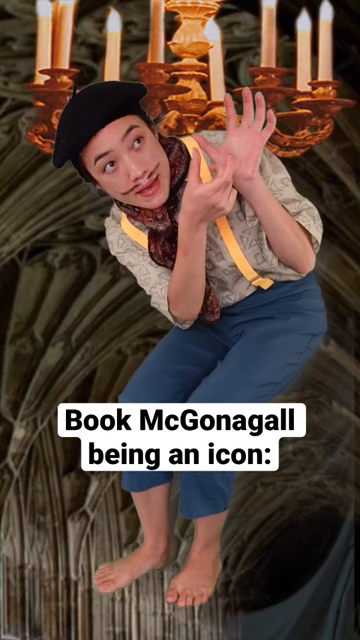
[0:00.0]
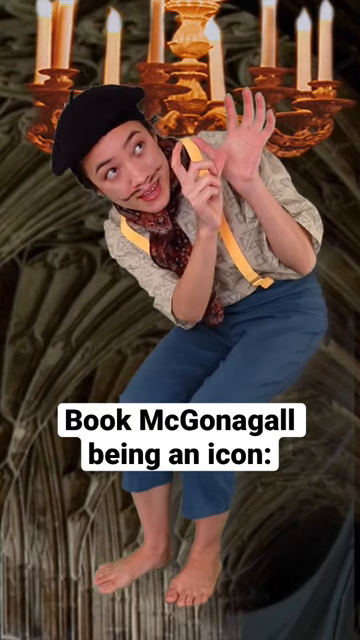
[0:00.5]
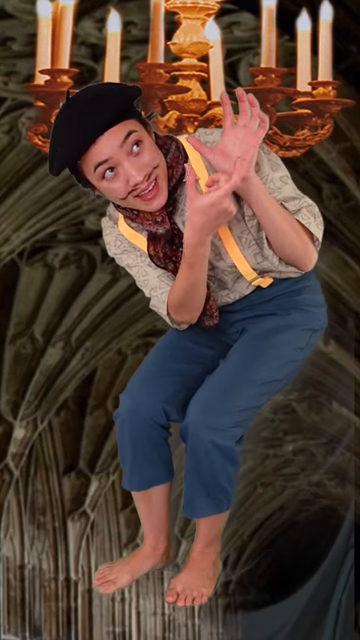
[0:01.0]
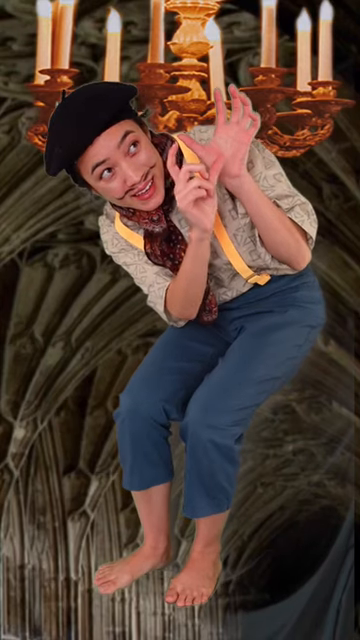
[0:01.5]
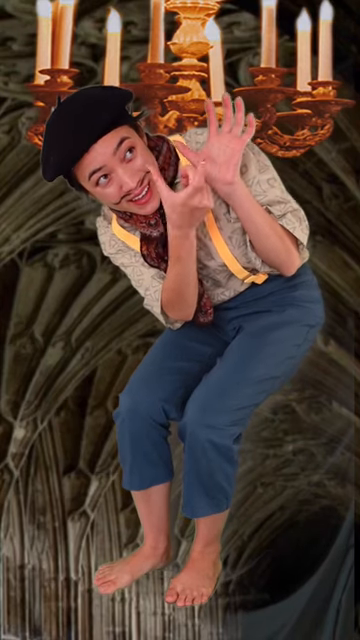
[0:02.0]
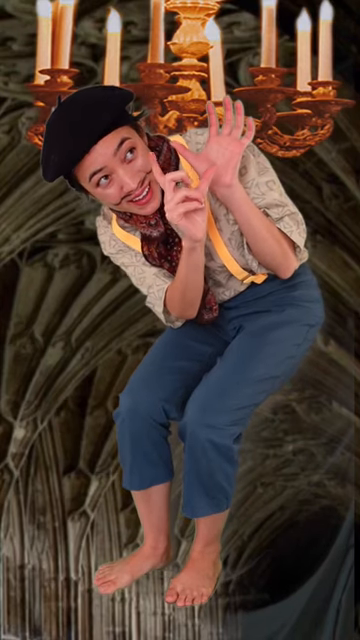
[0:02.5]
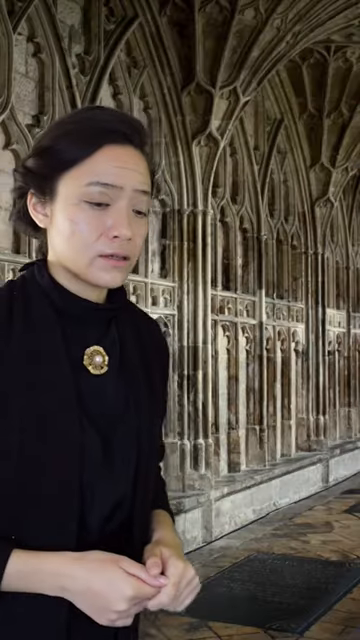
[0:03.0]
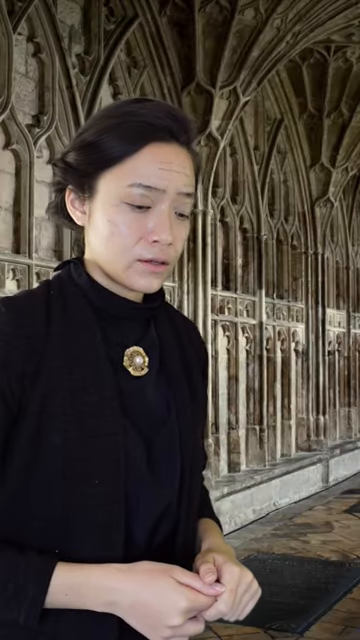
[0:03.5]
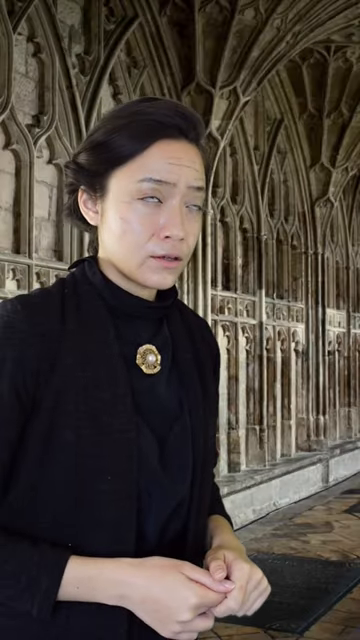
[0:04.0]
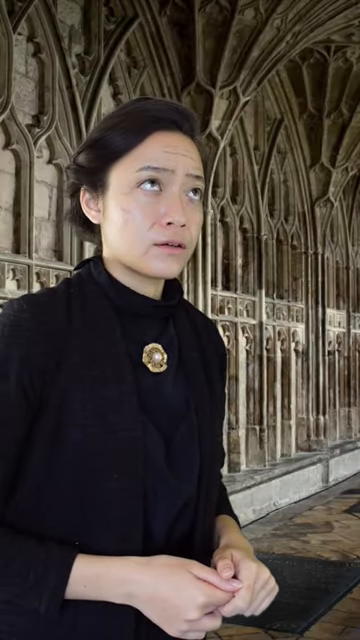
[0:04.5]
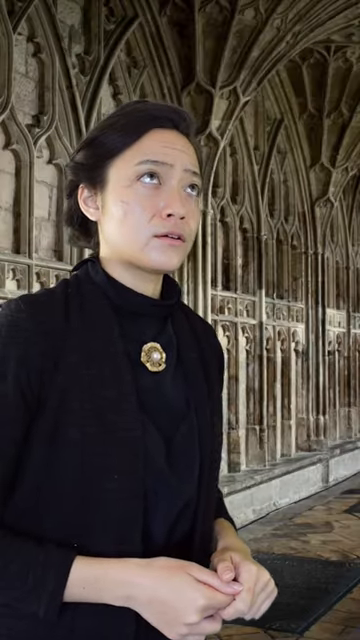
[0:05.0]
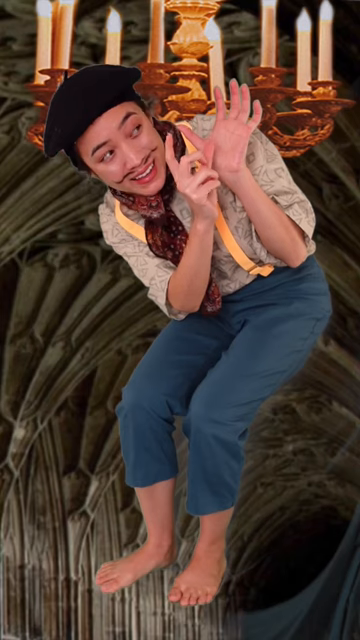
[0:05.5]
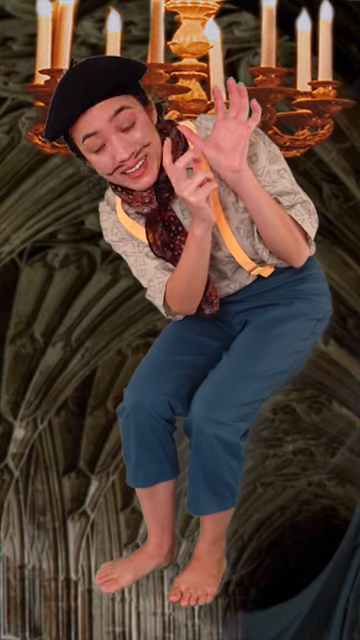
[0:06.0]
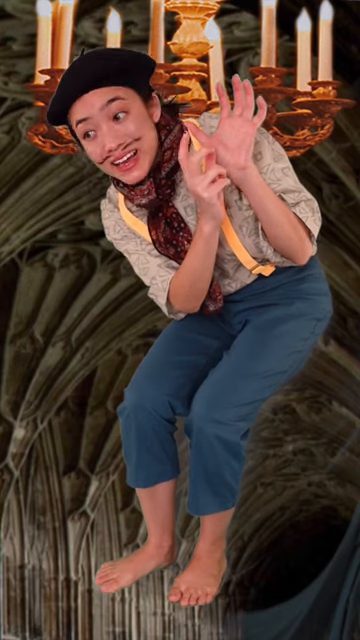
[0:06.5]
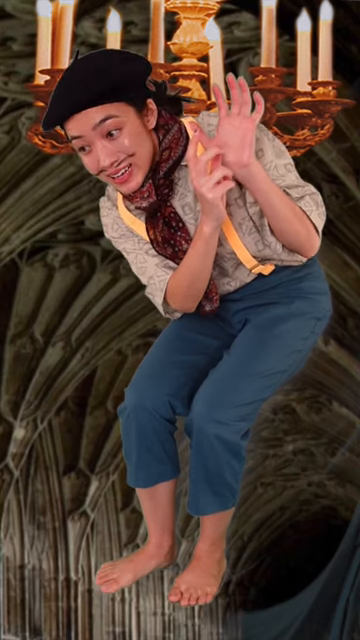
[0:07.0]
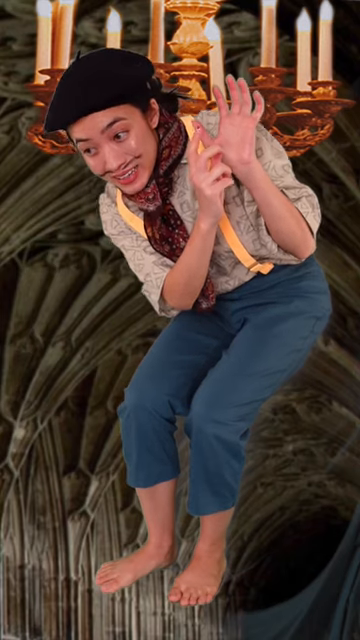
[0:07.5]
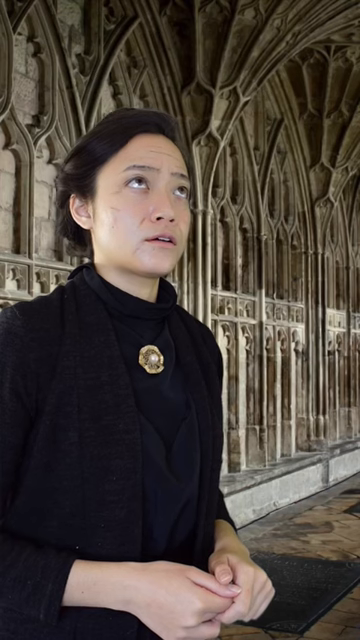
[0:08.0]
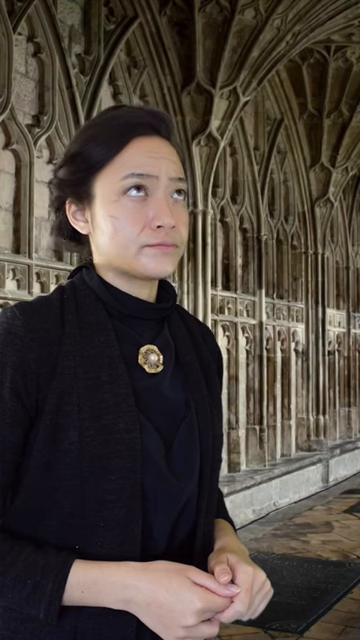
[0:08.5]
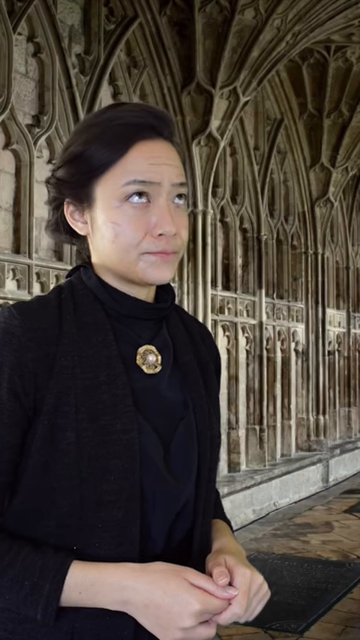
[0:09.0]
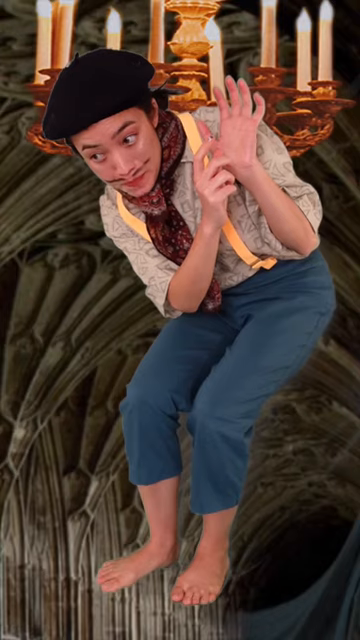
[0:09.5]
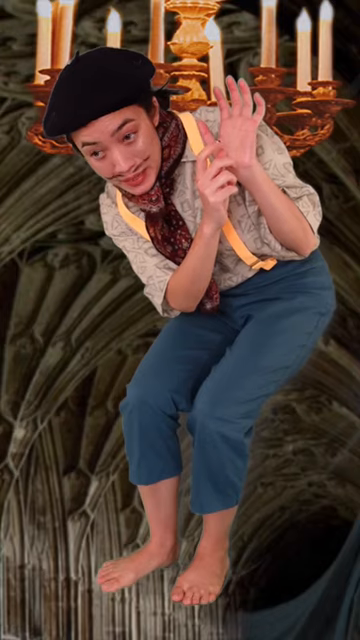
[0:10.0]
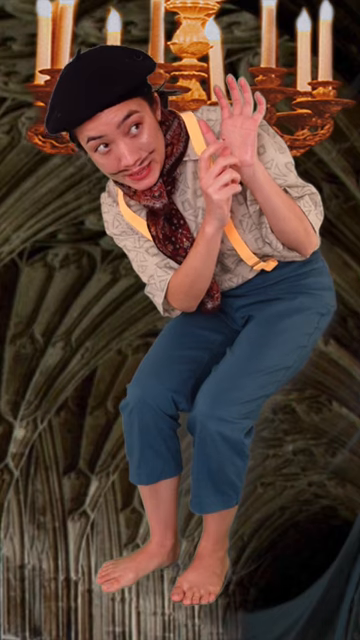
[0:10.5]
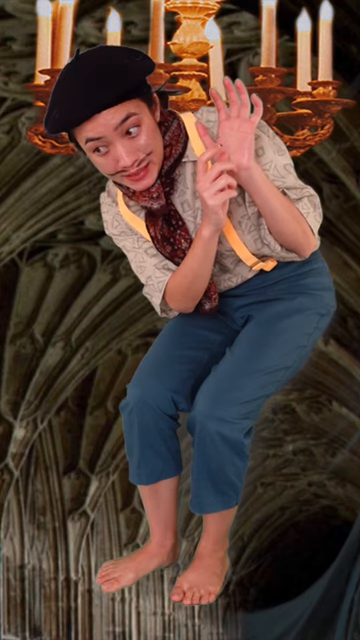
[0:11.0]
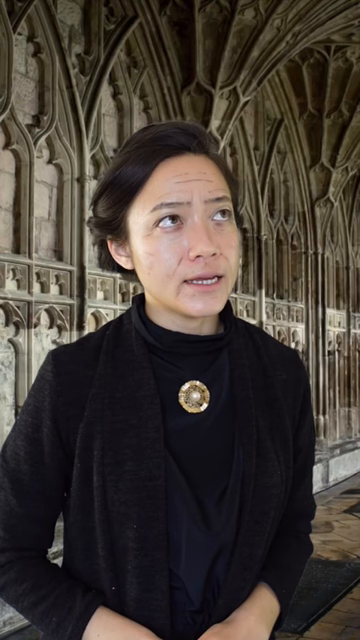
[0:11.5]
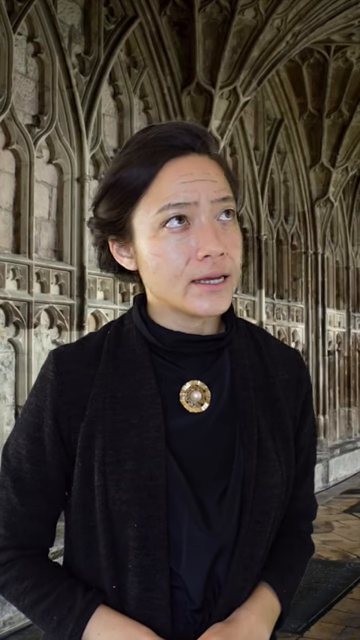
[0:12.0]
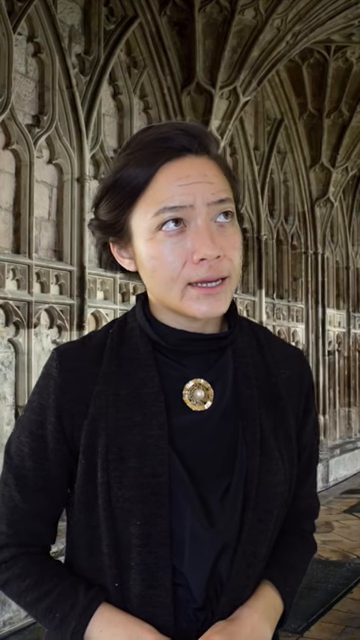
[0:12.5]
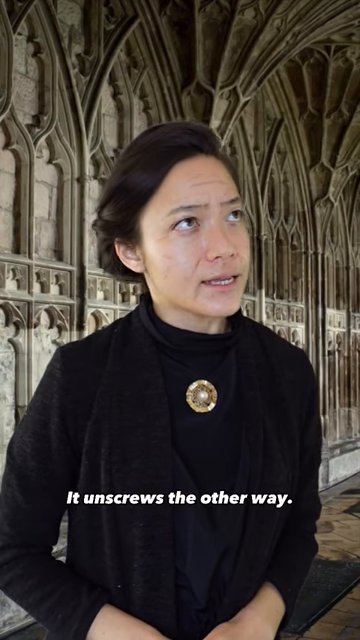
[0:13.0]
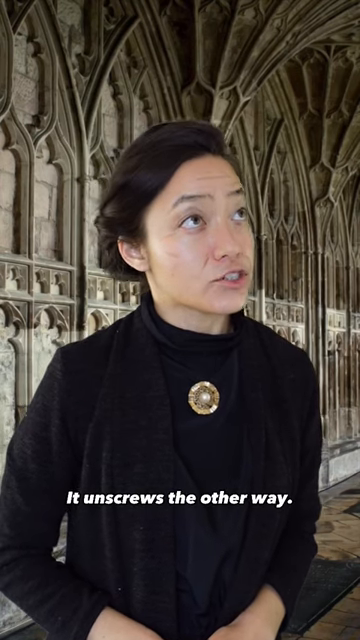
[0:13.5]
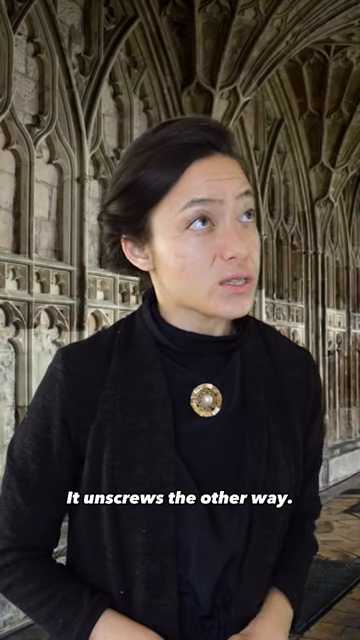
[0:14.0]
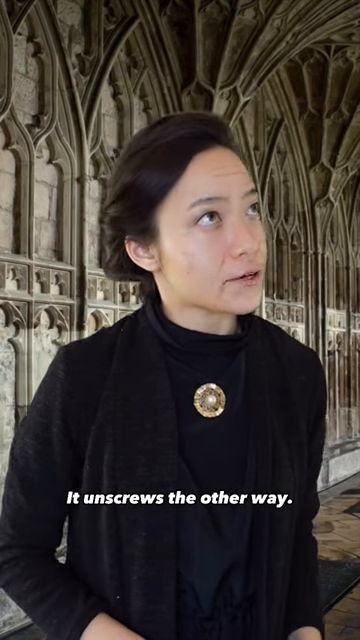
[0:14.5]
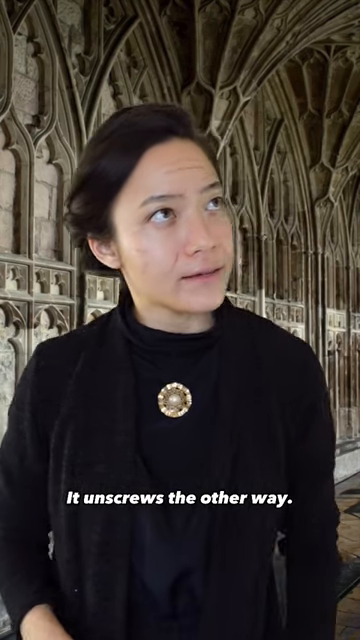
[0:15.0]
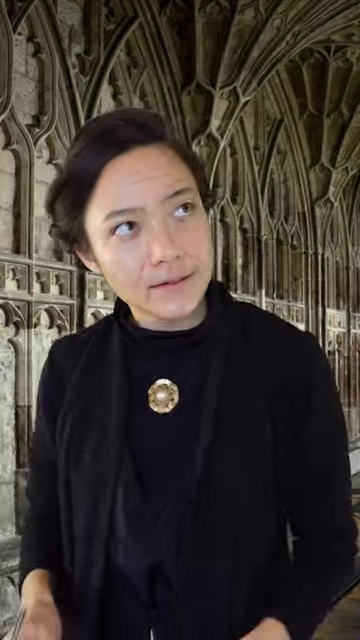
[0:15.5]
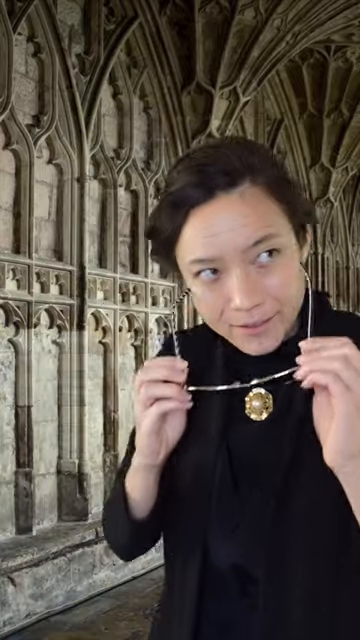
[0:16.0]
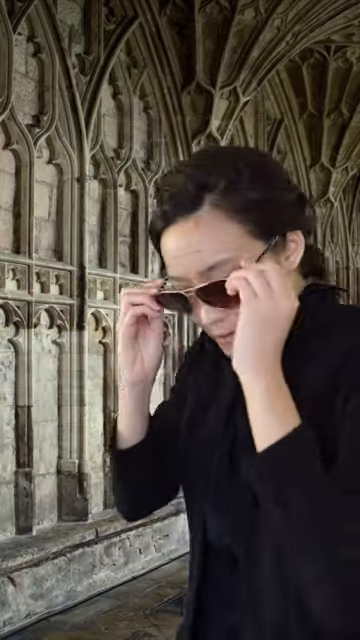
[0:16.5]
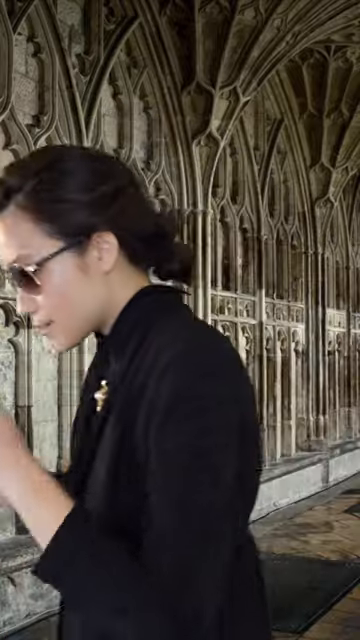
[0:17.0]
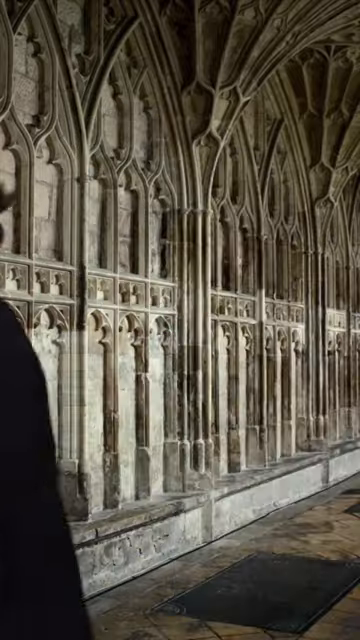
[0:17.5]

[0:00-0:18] A person wearing a French hat and a drawn-on mustache, blue pants, no socks, and two straps on their shirt appears to be gesturing with their hands as if rotating something such as a light bulb in place. The camera cuts to a person in a black shirt and black jacket; behind them appear to be the walls of a cathedral. The person in black looks up, and the person with the French hat and mustache is seen screwing in the light bulb while looking down at them. The two stare at each other. The person in black shakes their head and says, "It unscrews the other way," then puts on sunglasses and walks away.